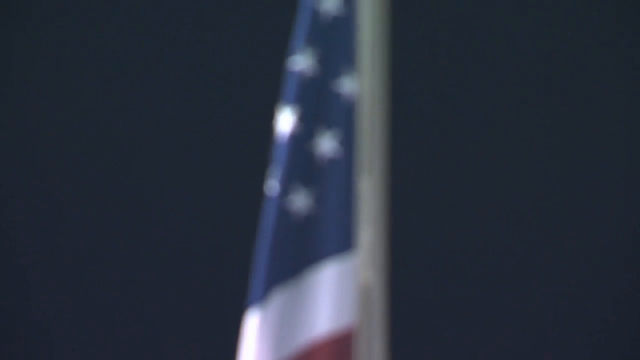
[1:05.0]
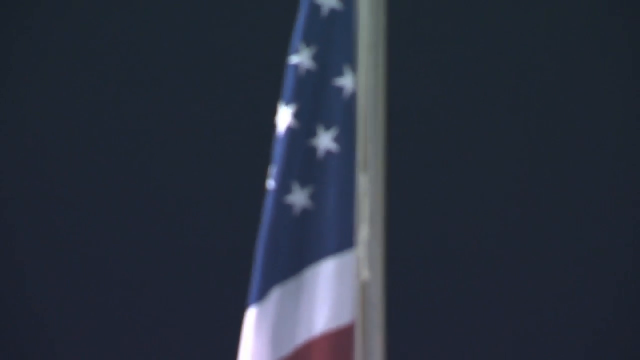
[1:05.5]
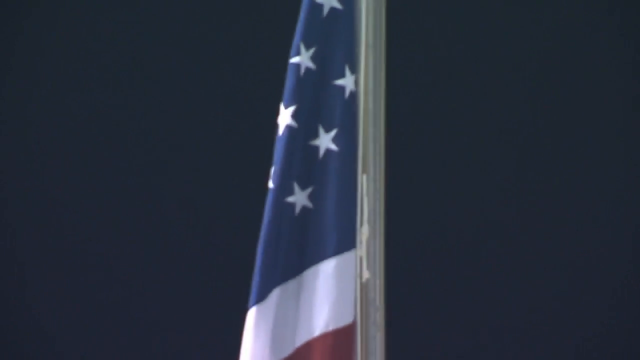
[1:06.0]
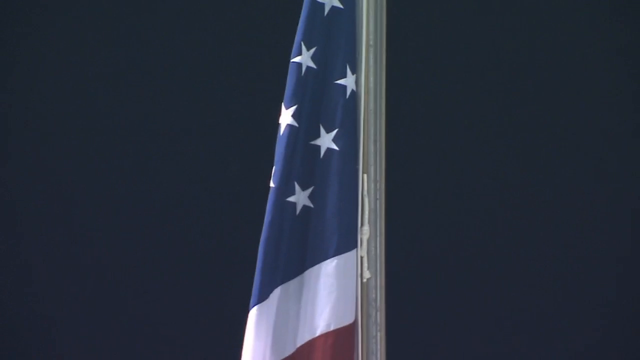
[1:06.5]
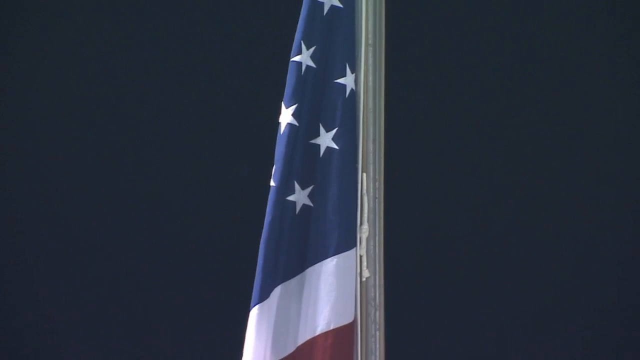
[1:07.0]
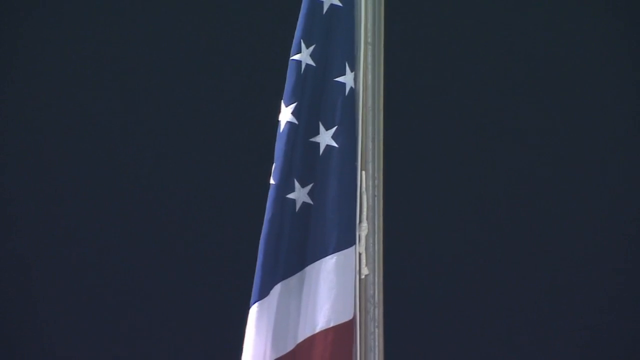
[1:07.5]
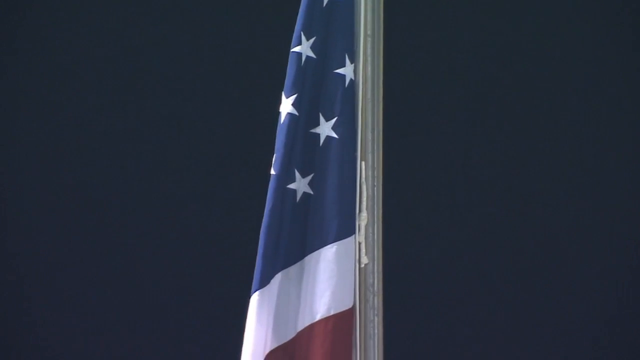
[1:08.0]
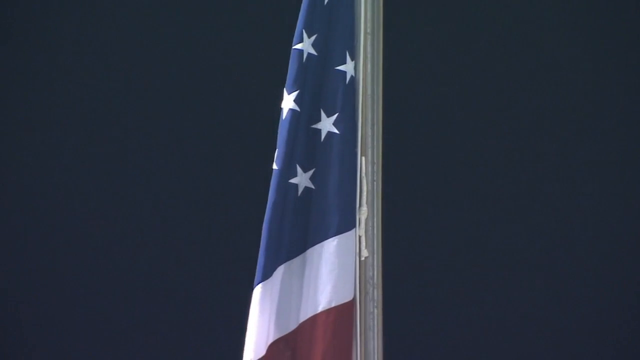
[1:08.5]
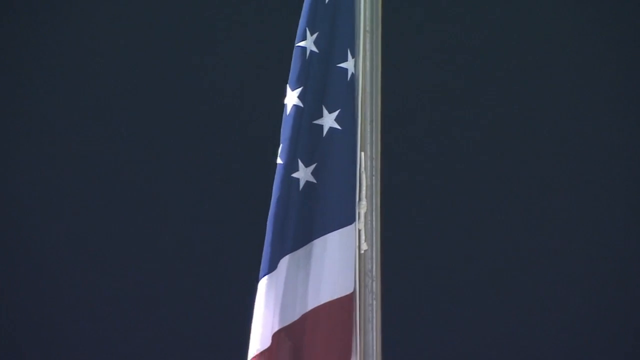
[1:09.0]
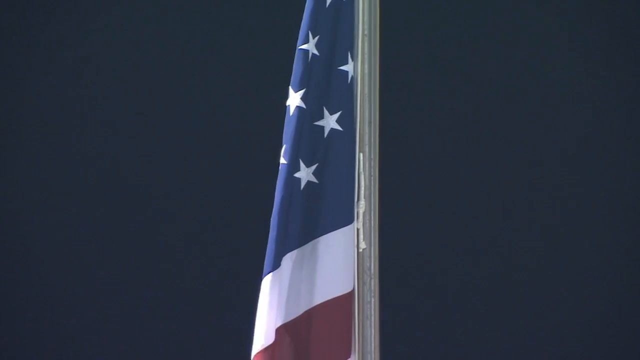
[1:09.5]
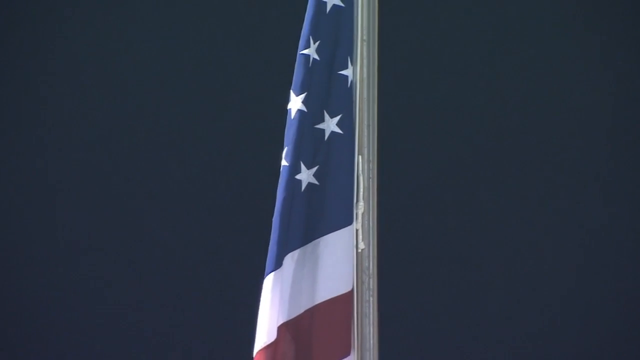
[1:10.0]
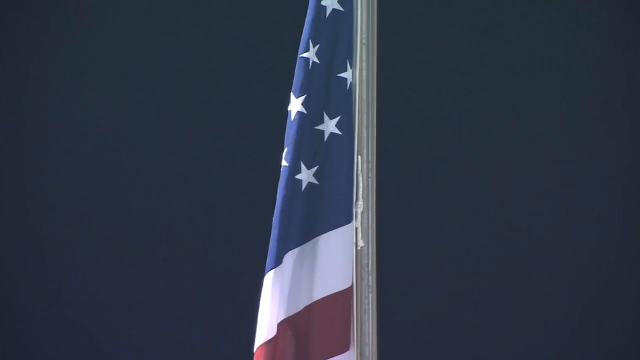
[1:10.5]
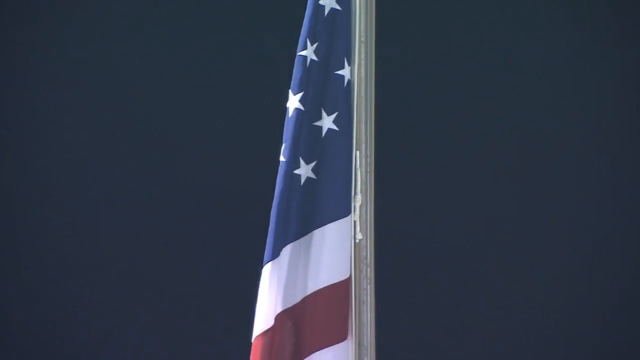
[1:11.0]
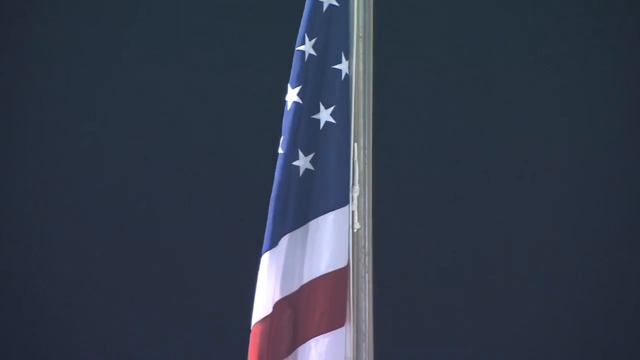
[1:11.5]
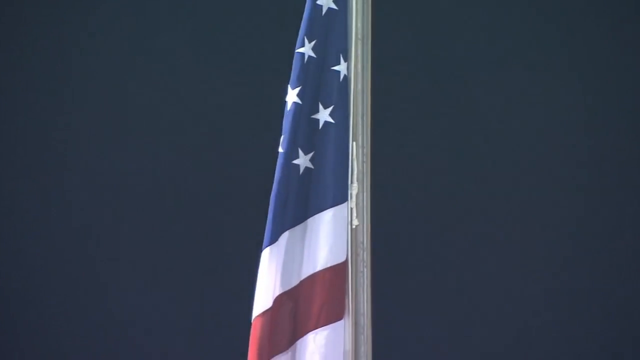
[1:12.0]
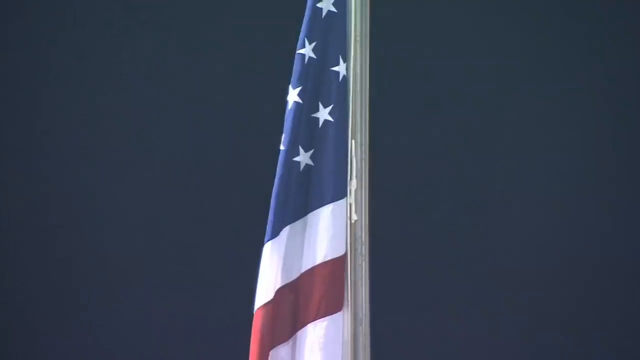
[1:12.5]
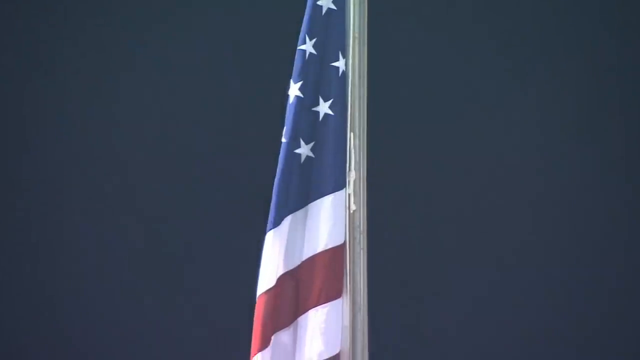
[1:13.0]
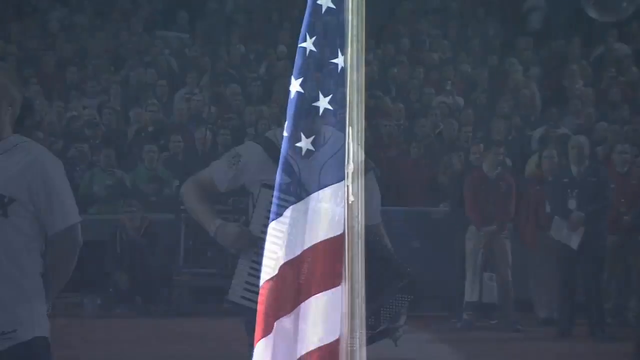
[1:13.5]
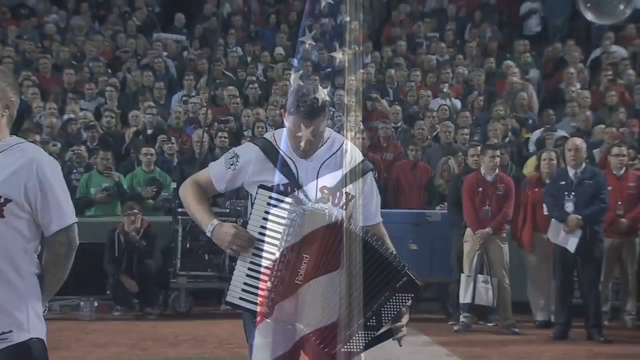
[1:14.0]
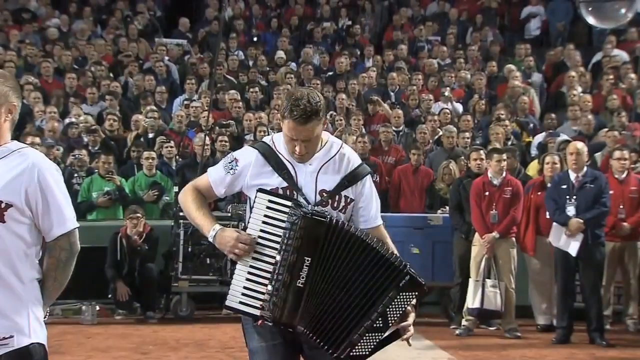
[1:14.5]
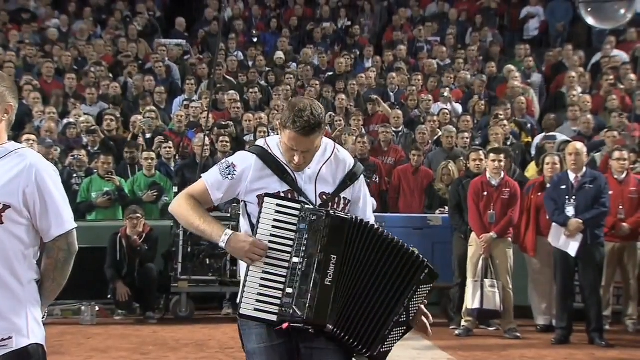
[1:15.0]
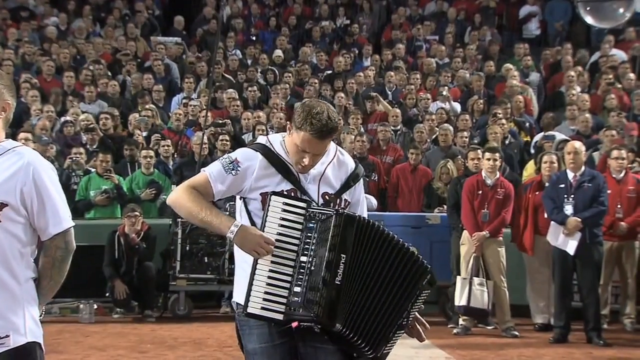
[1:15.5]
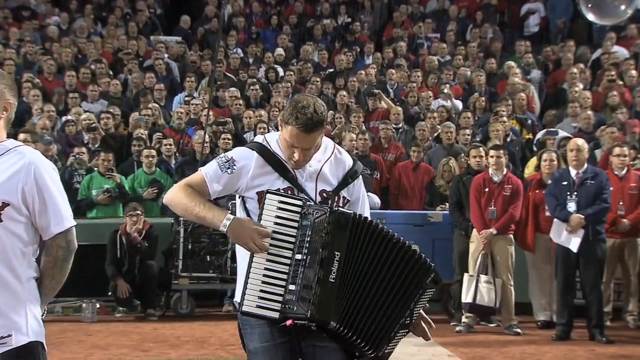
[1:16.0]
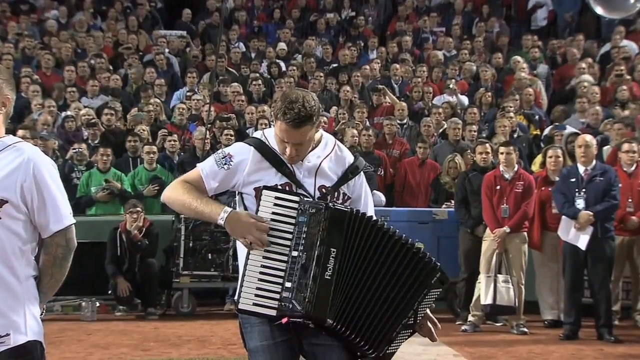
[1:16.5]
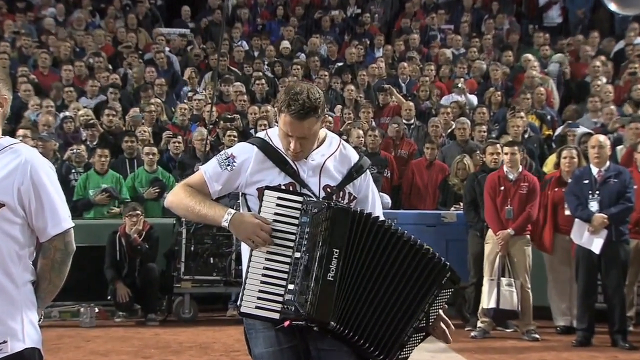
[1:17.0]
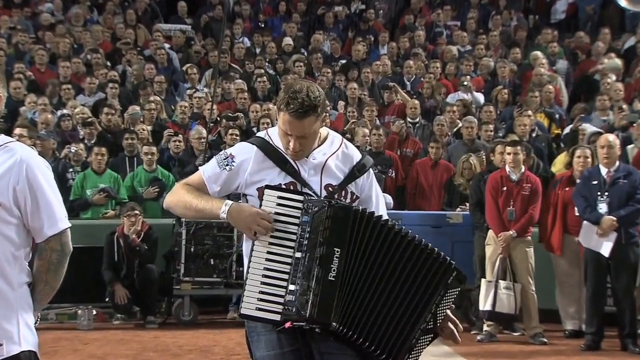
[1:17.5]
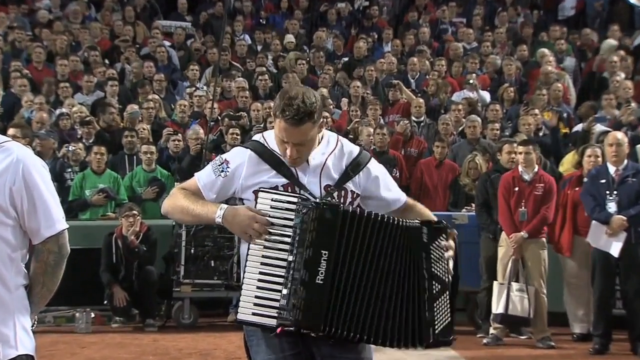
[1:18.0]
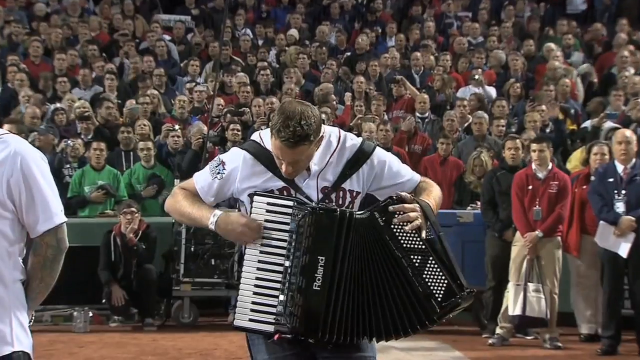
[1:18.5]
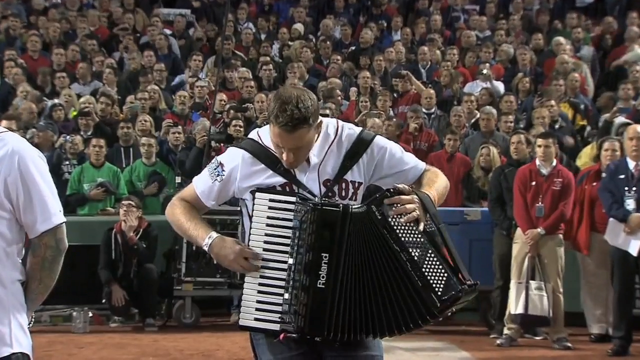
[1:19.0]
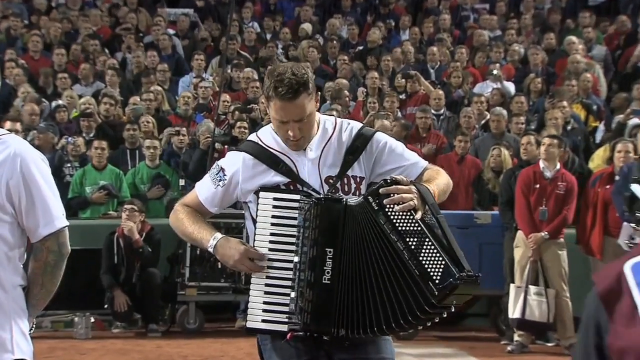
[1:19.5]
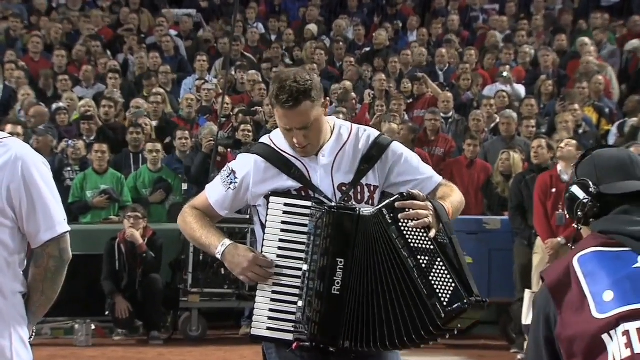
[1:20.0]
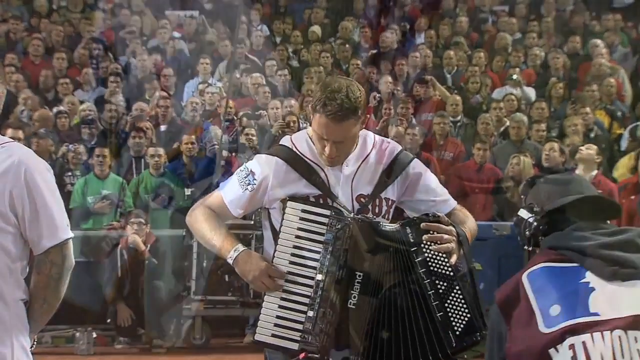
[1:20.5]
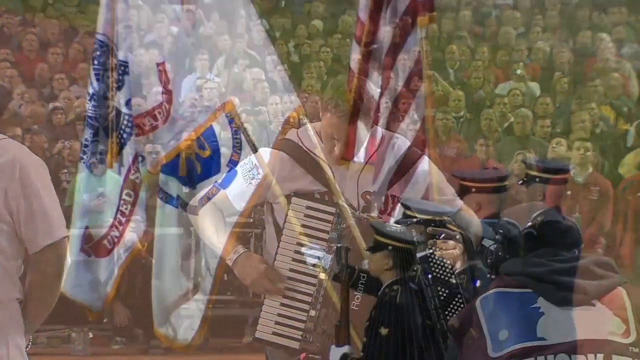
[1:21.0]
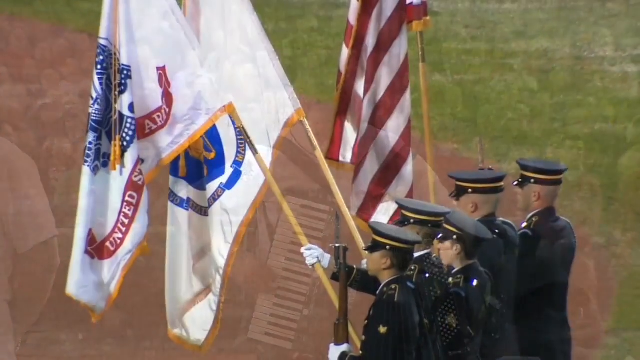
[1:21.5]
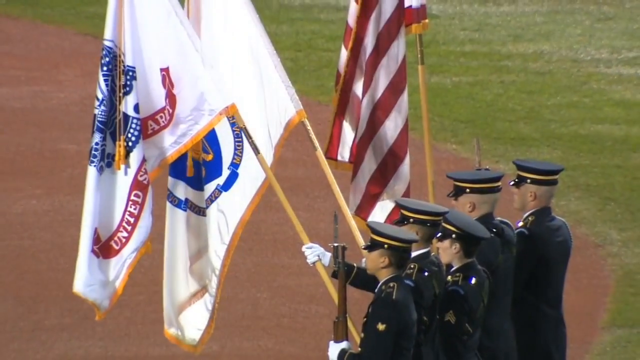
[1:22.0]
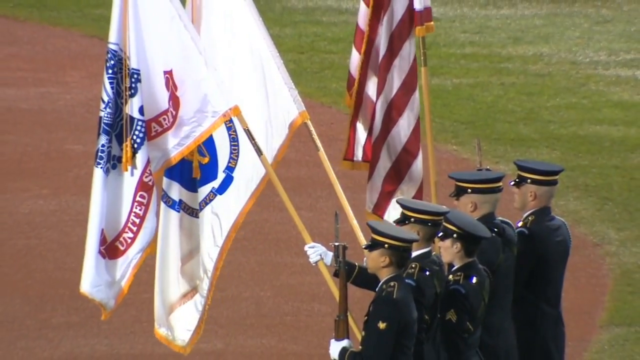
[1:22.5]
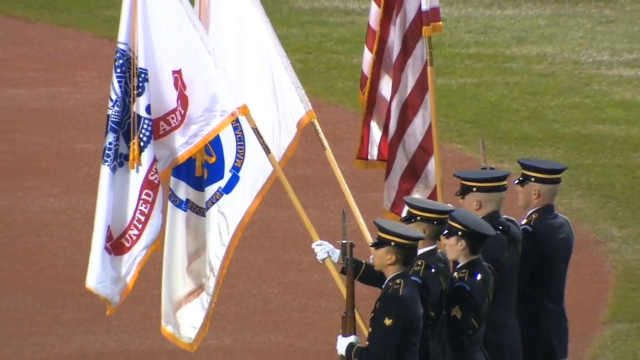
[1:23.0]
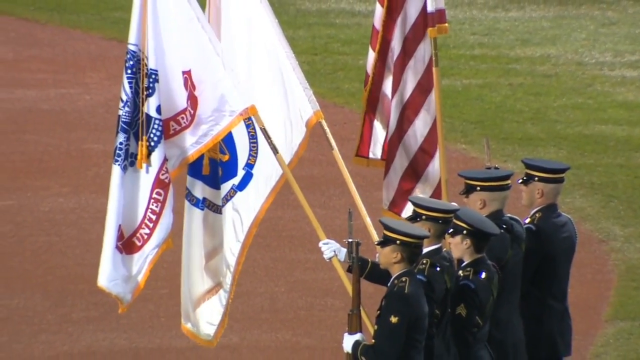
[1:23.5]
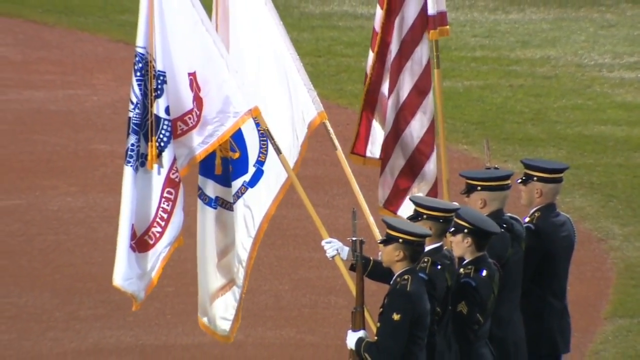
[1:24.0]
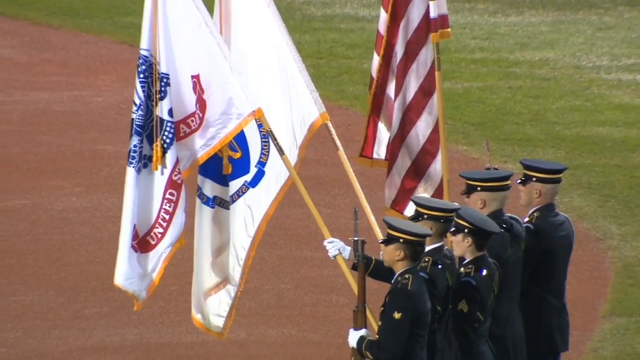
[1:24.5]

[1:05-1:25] A clearer, more zoomed-in picture of the flag shows it still hanging, with the night sky behind it in the baseball stadium. The camera then pans to a man playing the accordion, apparently to the tune of the national anthem. He looks like he is really getting into it, kind of swinging his head around. Behind him is the crowd, including a few people in green shirts, possibly fans of the other team, and a few people in suits. Everyone stands with their hats or hands on their hearts. A cameraman is visible with equipment that says "network," apparently from a television channel, getting footage of the singers and the accordion player.